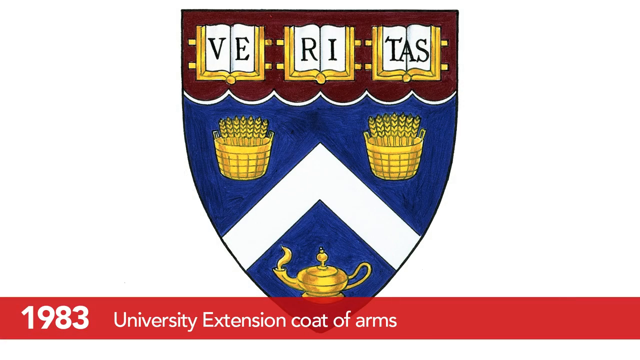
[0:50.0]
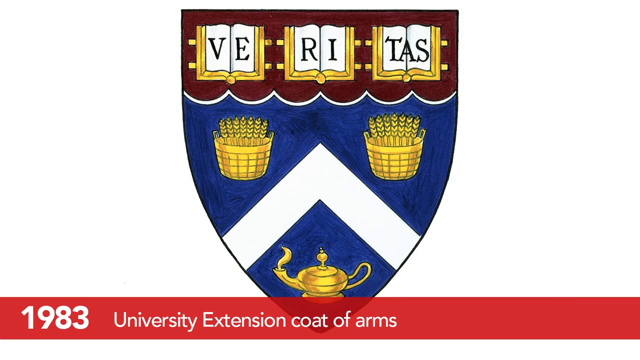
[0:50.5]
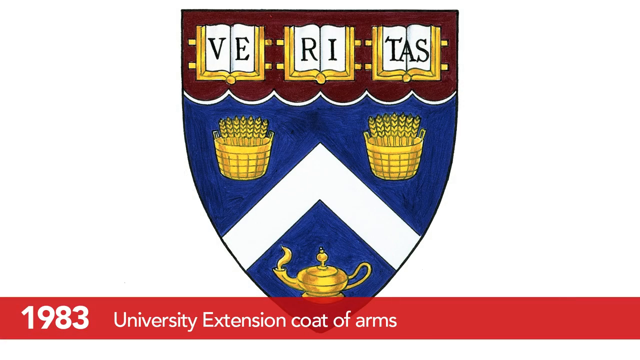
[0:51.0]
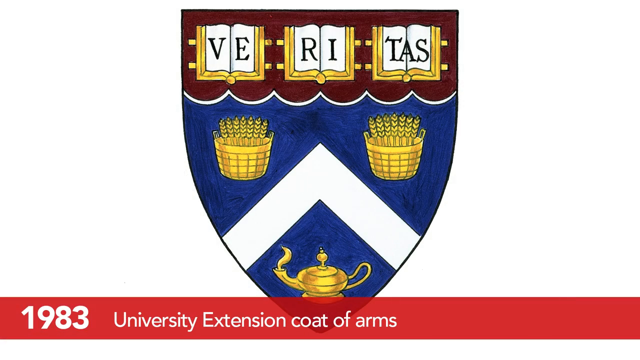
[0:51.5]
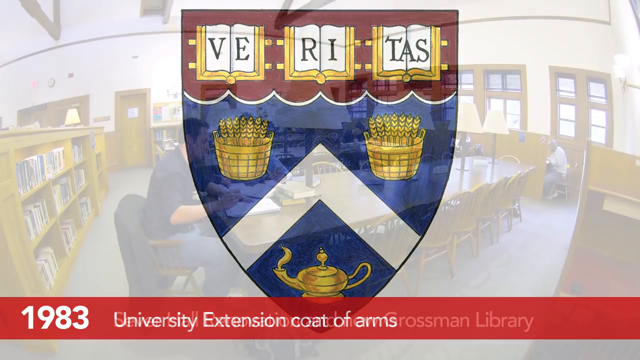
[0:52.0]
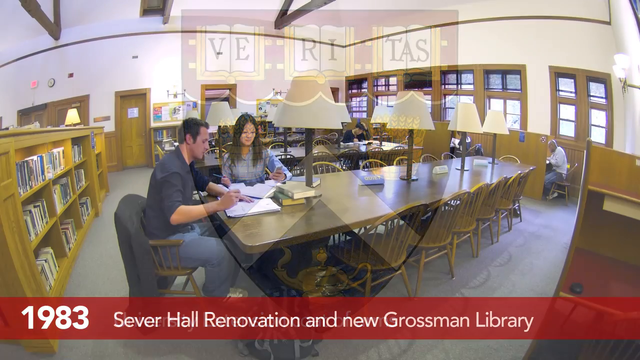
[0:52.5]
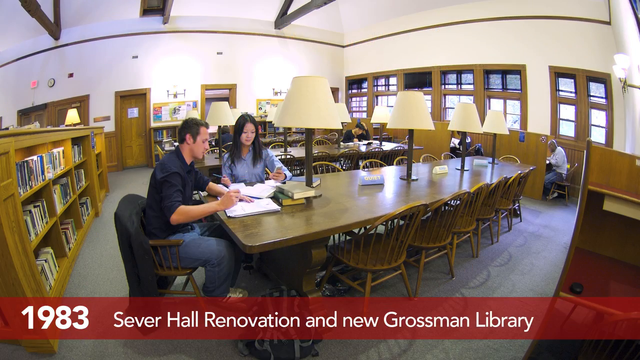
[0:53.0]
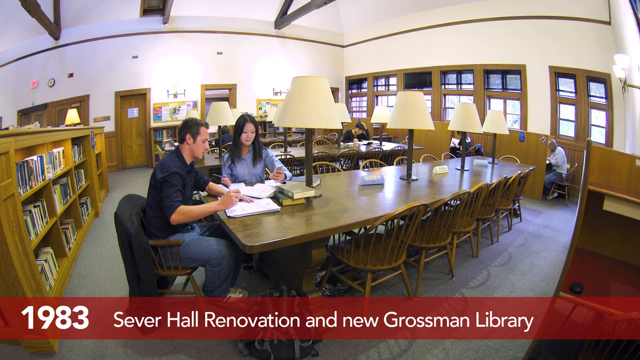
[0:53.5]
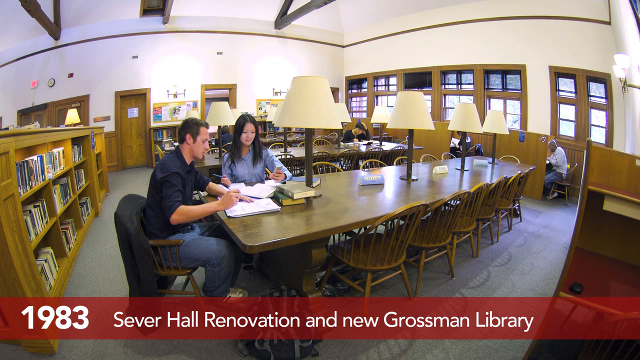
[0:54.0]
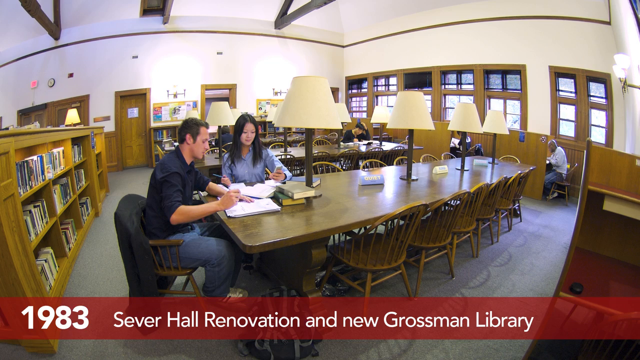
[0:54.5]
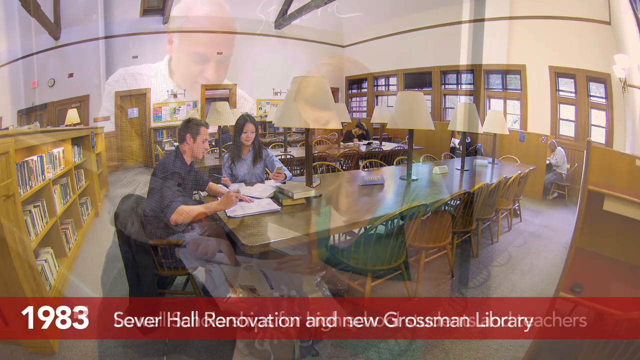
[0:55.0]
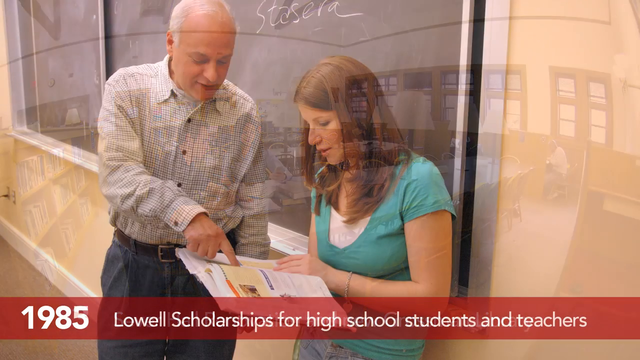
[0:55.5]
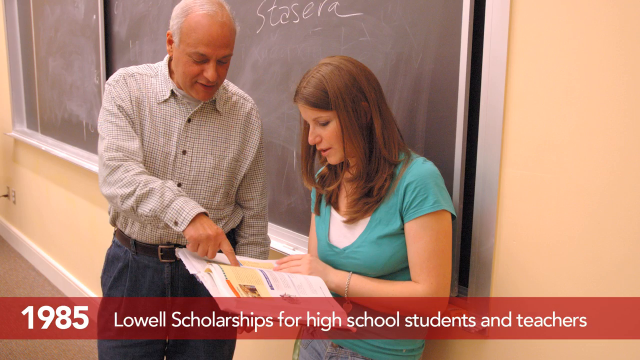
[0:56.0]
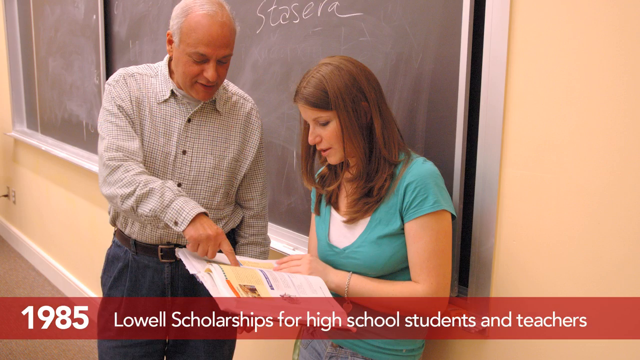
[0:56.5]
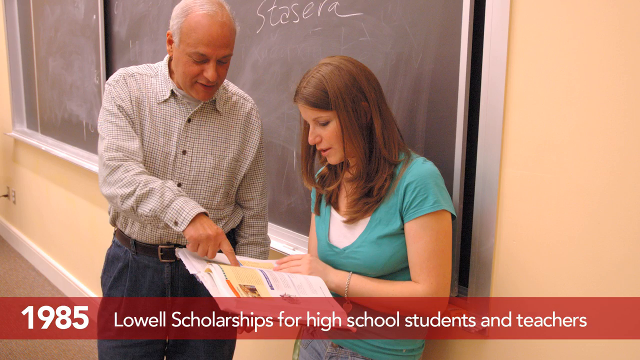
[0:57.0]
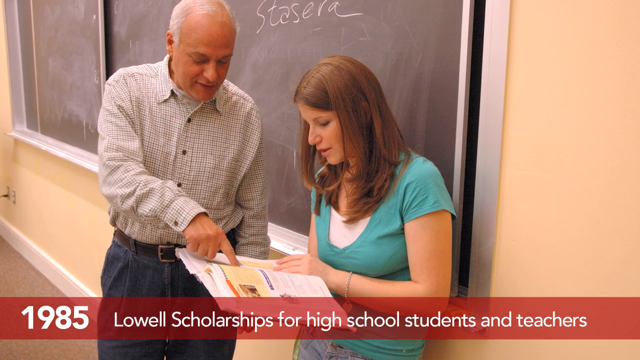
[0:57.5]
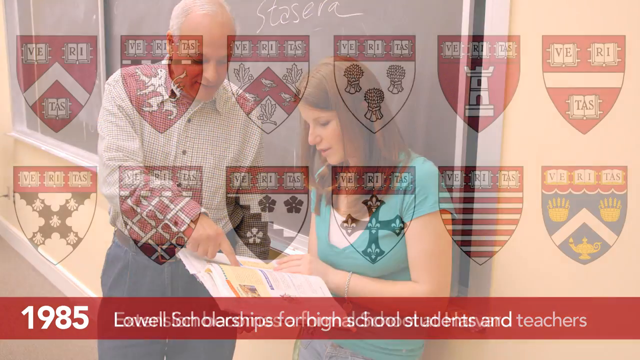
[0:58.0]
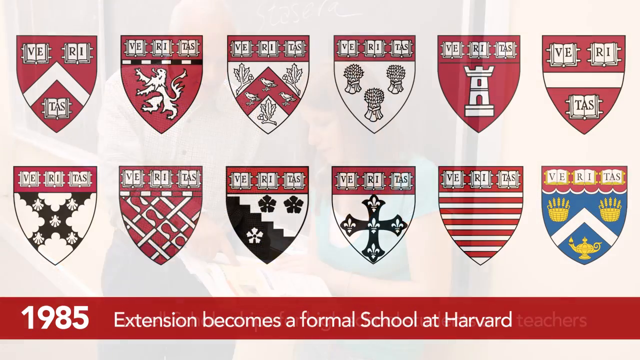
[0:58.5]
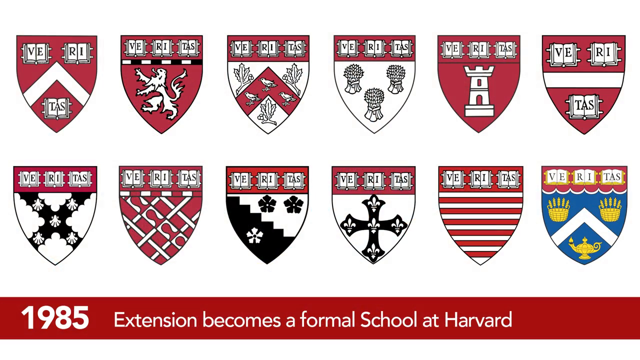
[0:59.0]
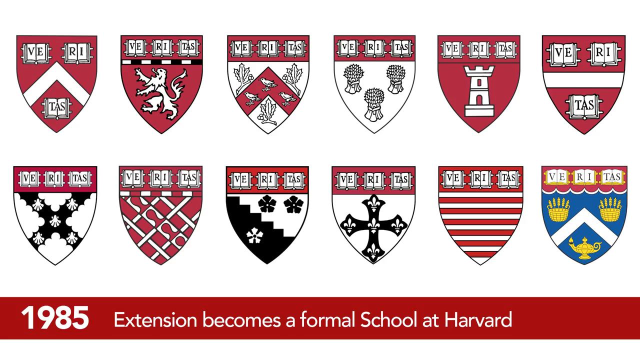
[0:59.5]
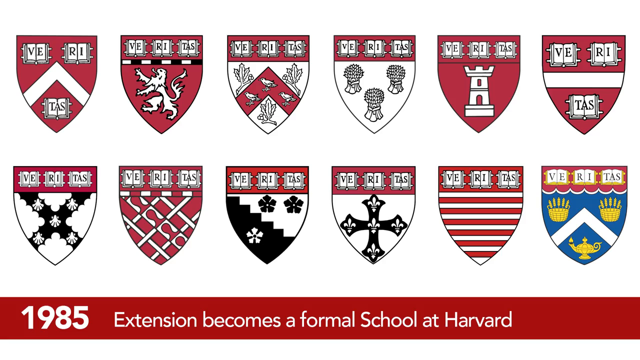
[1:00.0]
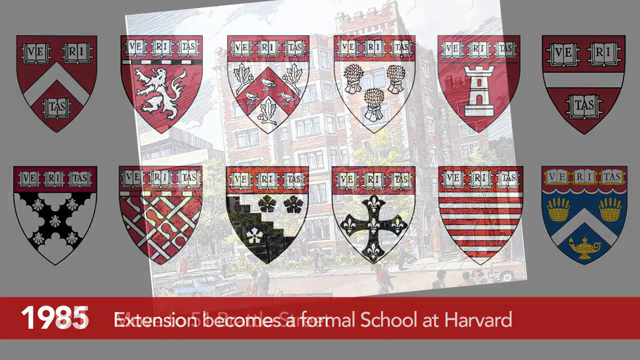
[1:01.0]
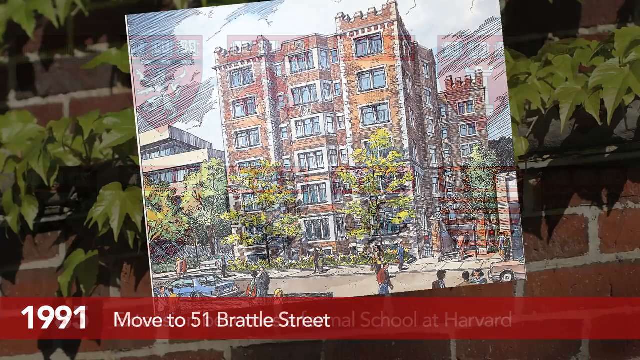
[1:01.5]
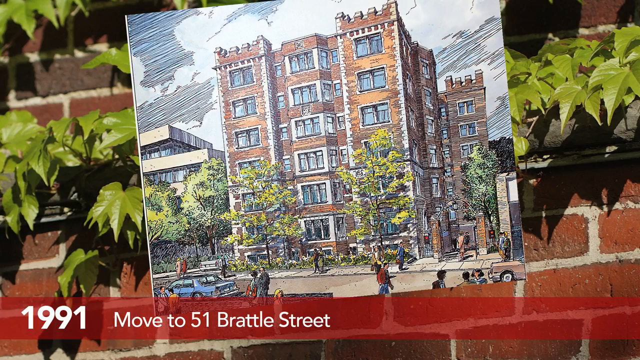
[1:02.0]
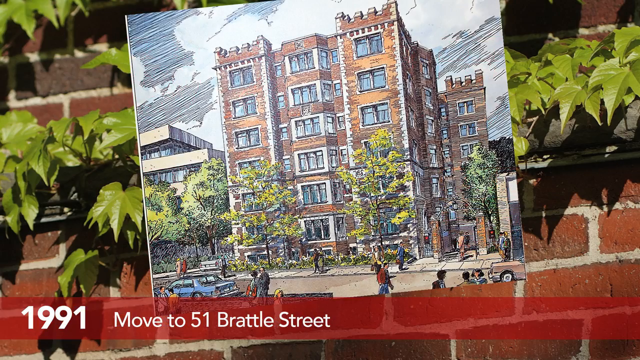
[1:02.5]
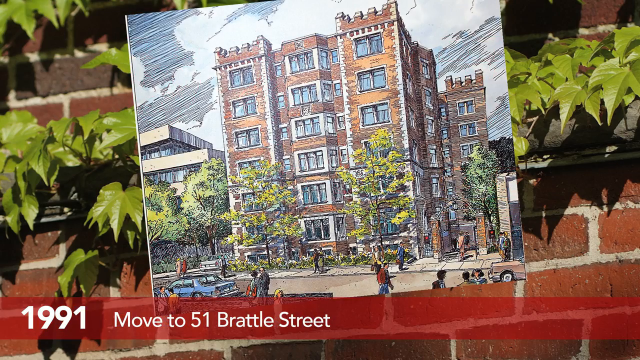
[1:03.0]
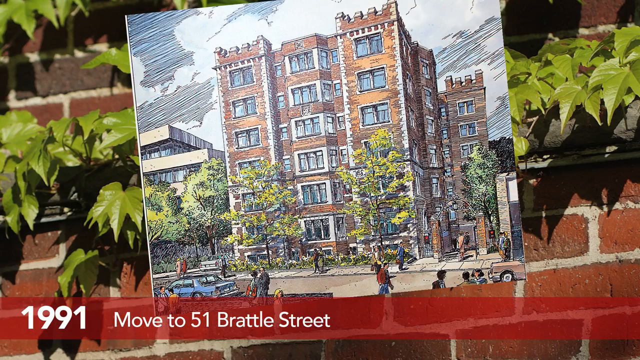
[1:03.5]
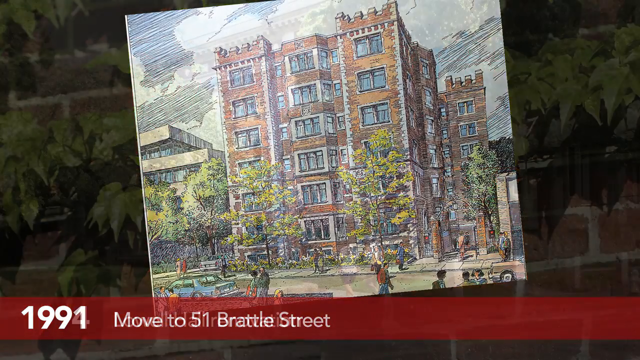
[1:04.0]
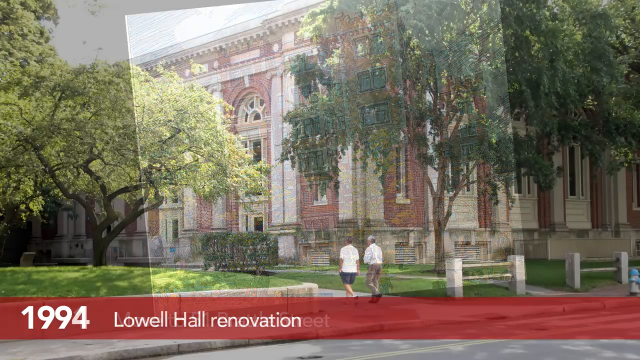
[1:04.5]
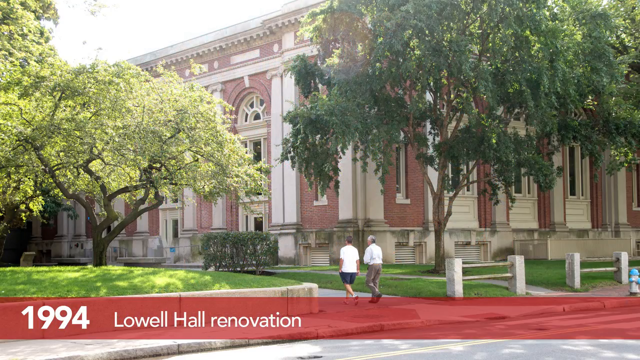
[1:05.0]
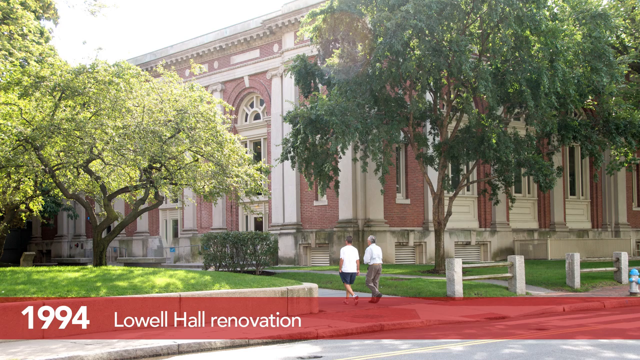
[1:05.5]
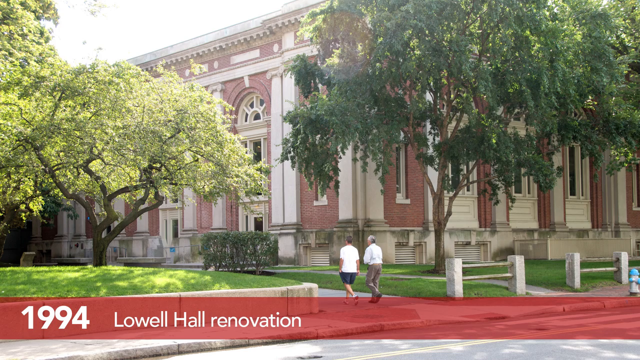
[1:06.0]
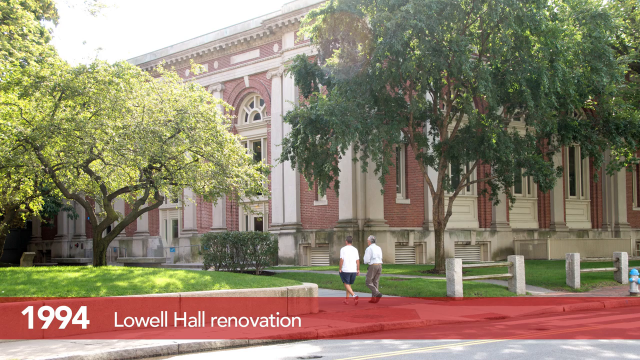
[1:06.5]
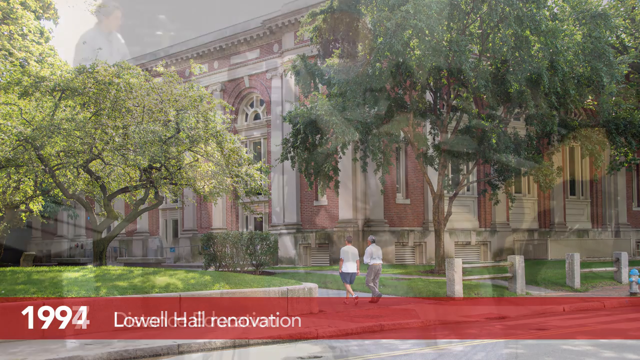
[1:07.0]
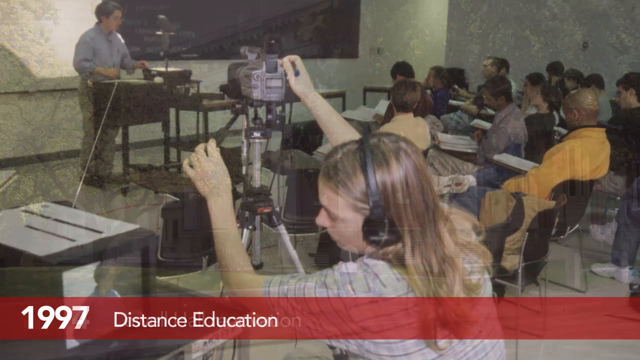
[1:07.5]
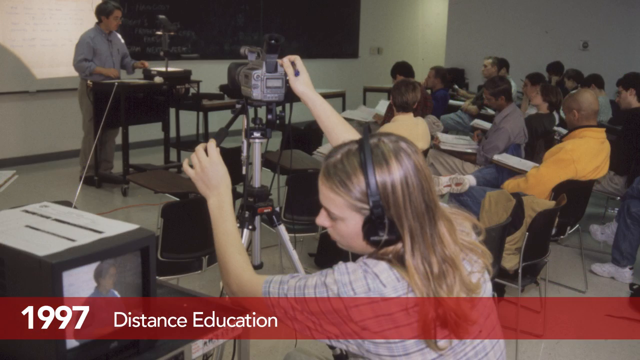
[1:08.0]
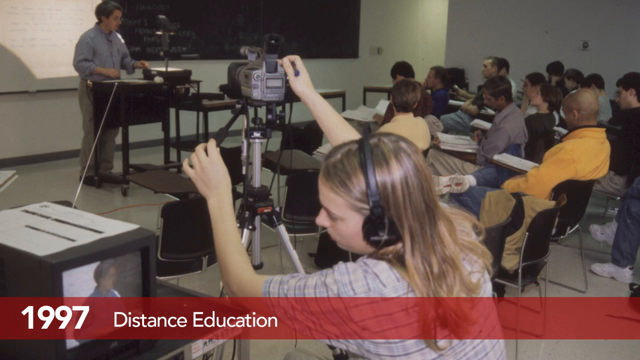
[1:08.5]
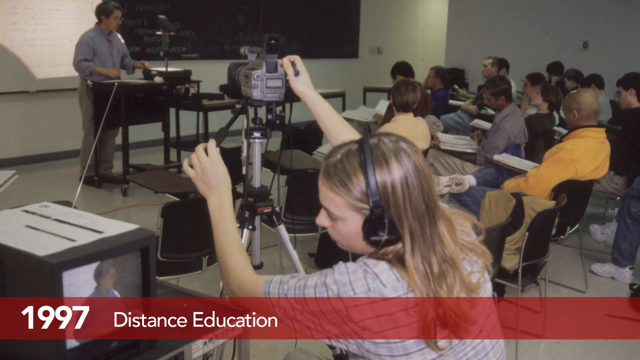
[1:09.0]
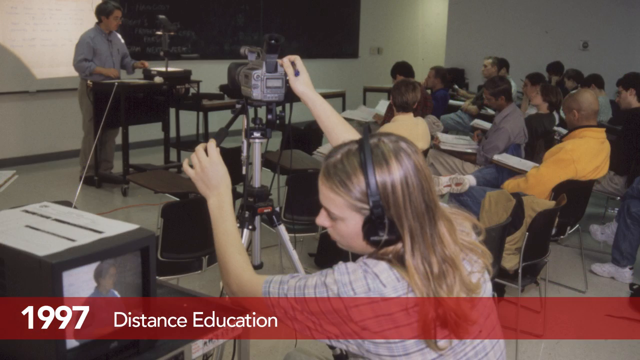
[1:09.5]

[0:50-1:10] What looks like a library appears, with two students sitting at one table with books in front of them, reading. The library has a few big wooden tables, chairs and bookshelves, and the students seem to be having a discussion. Text reads "Sever Hall Renovation and New Grossman Library" and "New World Scholarships for High School Students and Teachers." A teacher is with a student reading a book, showing the student something in class. Next come several items that look like badges, with the text "Extension becomes a formal school at Harvard." Then "move to 51 Brattle Street" appears with a building: a drawn building pasted onto a real building, with leaves behind it. The painting shows a very big building with trees in front of it and some people walking up and down. Then "1994 Louisville Hall Renovation" appears, with two people walking along what is presumably that hall, trees surrounding it and green hedge grass.